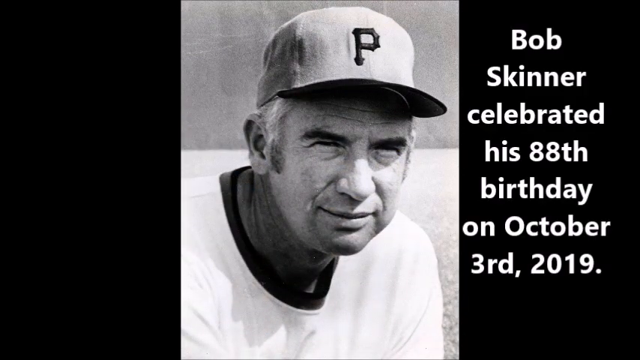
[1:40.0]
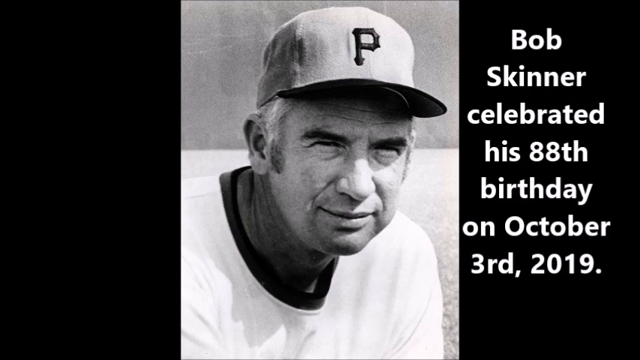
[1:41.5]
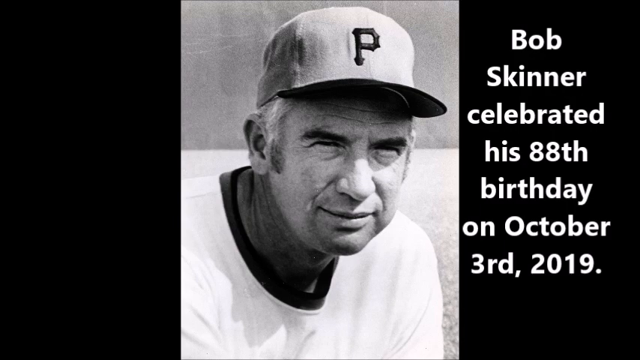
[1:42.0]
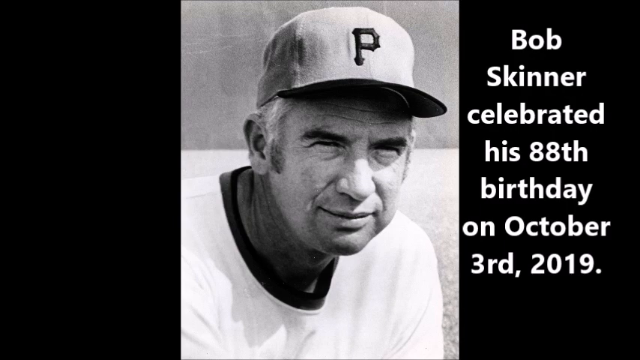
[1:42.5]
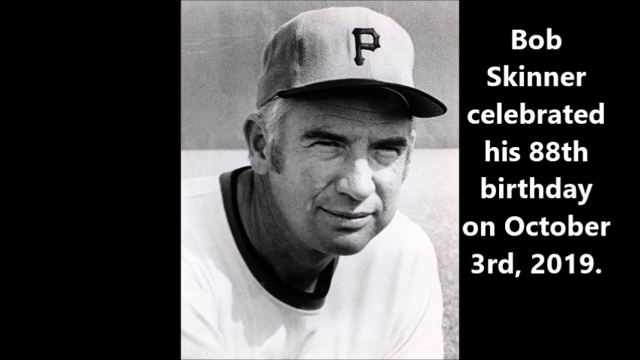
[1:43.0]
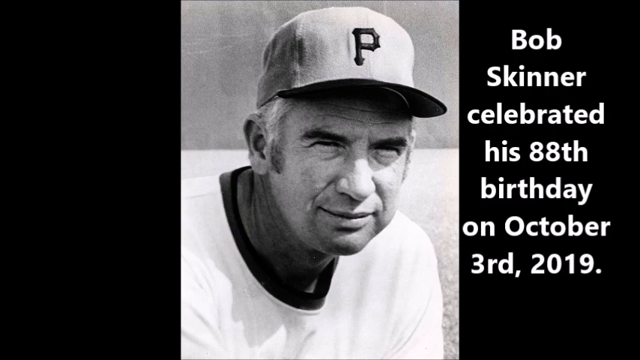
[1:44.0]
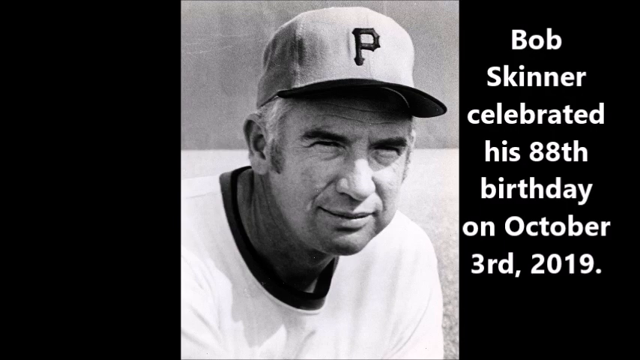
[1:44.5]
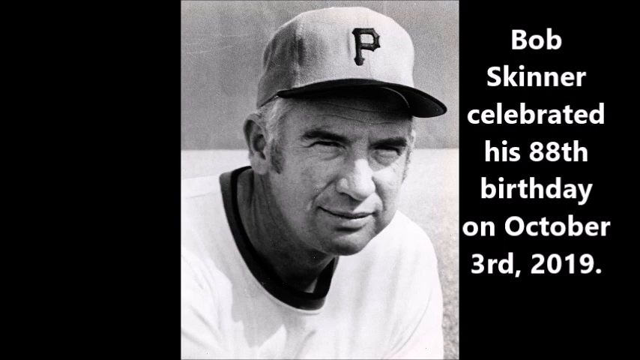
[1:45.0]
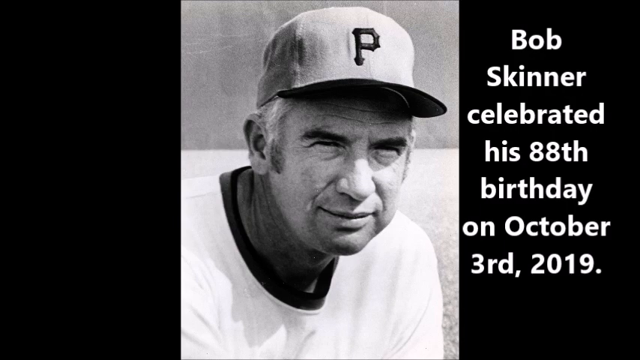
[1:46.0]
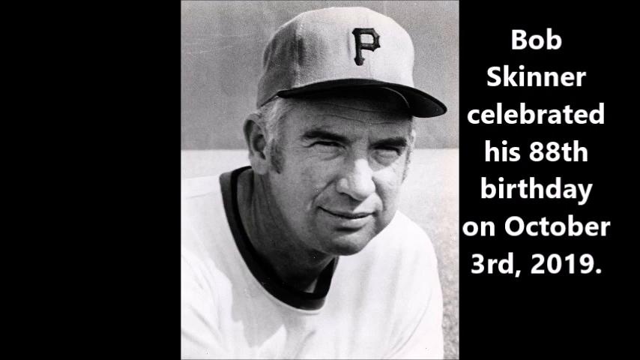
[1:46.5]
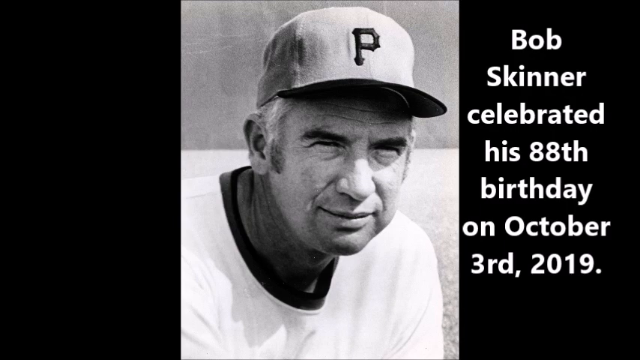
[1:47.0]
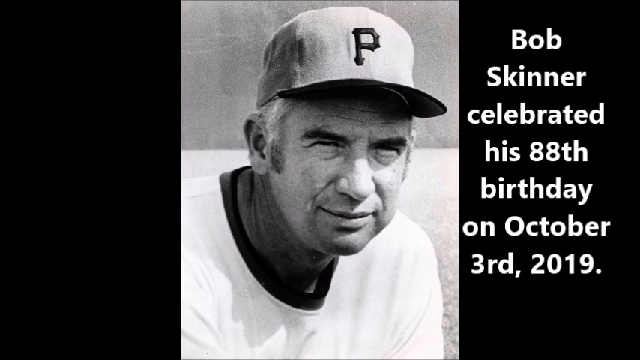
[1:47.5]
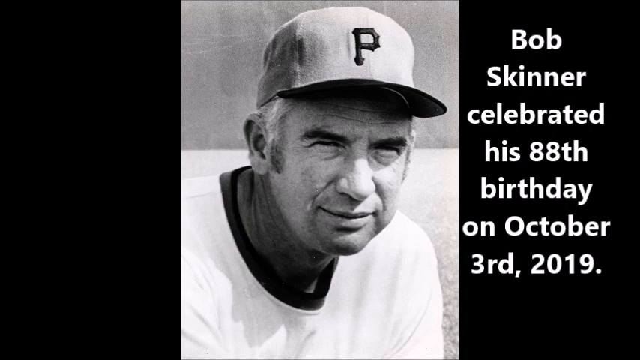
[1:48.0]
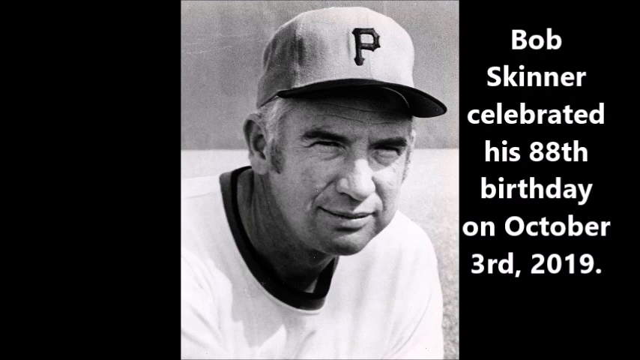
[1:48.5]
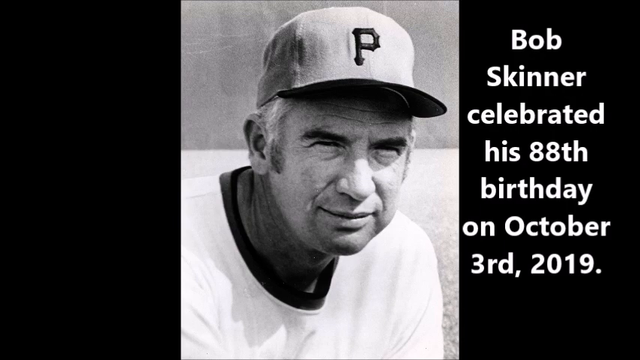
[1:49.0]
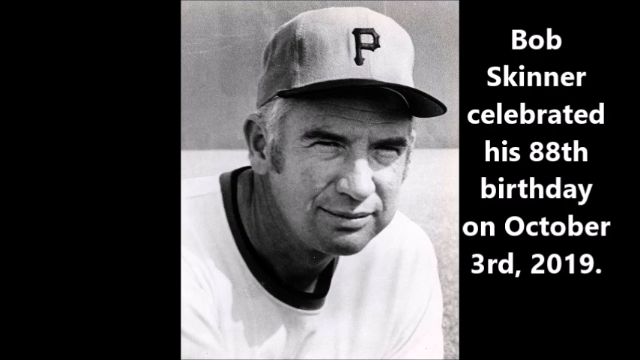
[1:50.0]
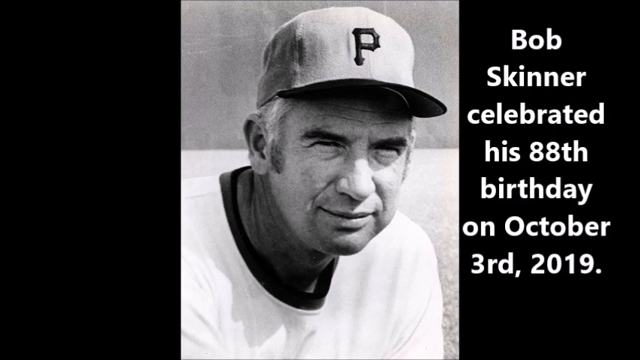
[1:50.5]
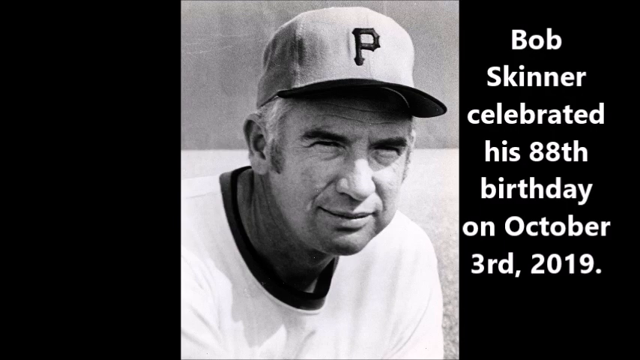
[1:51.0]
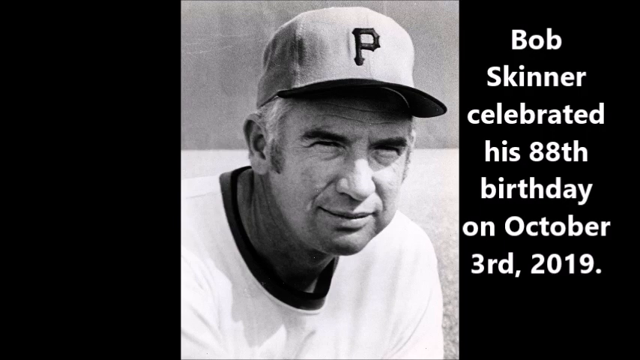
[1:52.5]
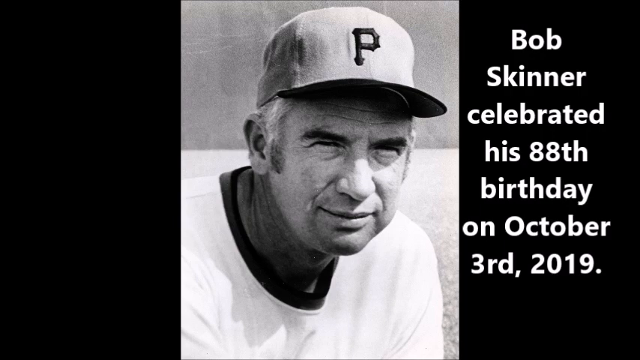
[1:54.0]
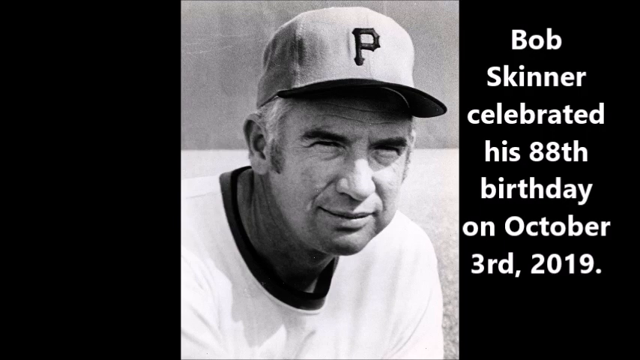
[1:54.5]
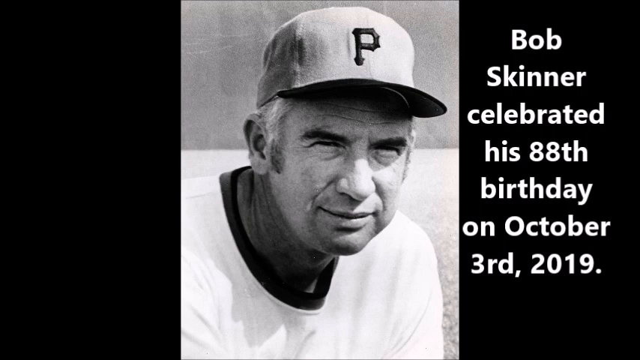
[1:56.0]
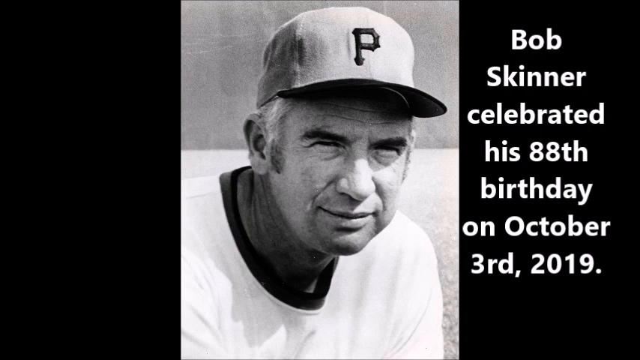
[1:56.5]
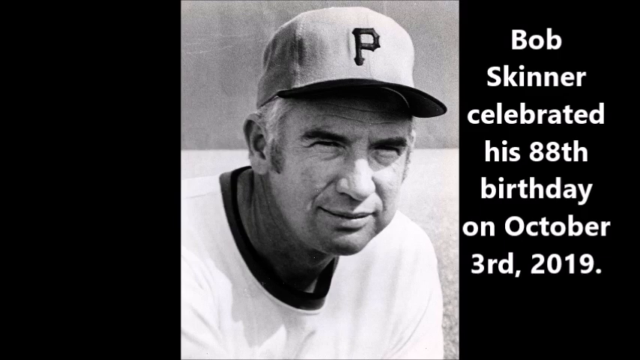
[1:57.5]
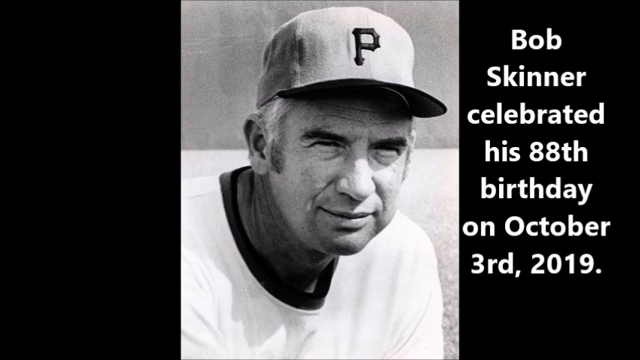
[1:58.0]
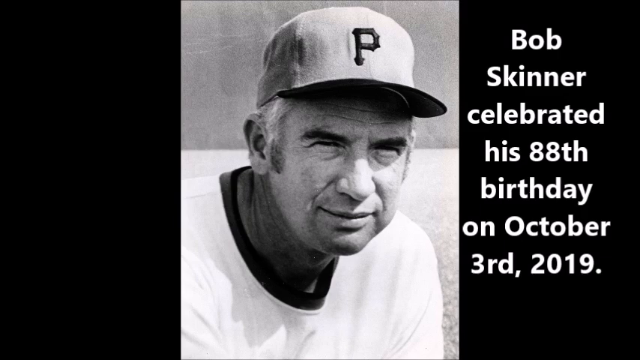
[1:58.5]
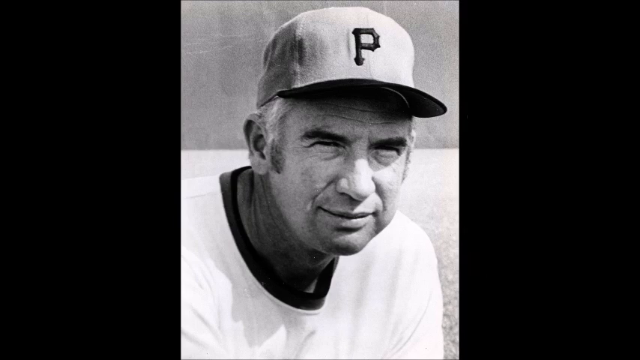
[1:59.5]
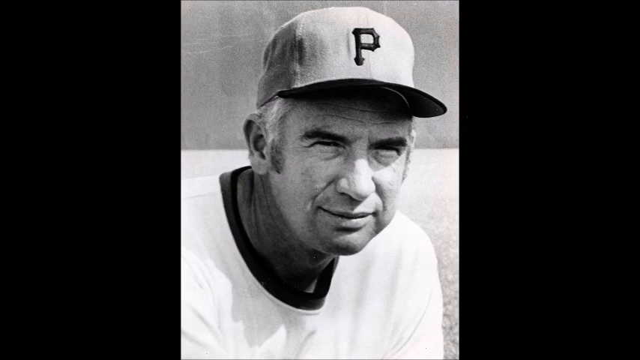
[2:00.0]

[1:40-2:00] A vertical image sits in the centre of the screen, bordered on both sides by black areas. It is a black and white photograph of a baseball player looking off to the right-hand side of the shot. He is an older man with grey hair, wearing a light-coloured baseball cap with a dark P on the front and a white jumper with dark-coloured trim around the collar. Behind him is some form of coloured backdrop, divided horizontally almost exactly in the middle of the screen, with the top section darker and the bottom section very light. White writing in the black section to the right reads 'Bob Skinner celebrated his 88th birthday on October 3rd, 2019'. The shot remains for several further seconds until the end of the video.